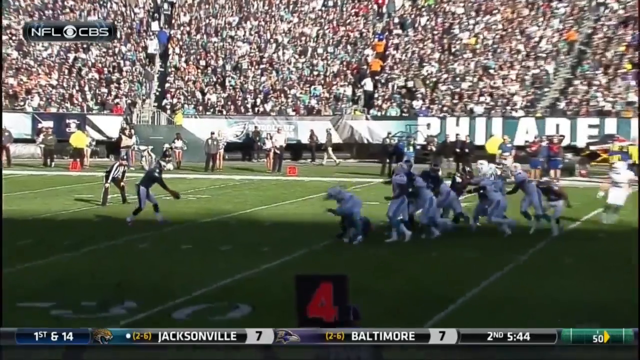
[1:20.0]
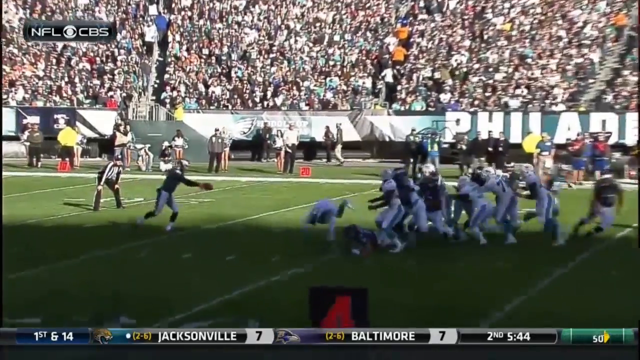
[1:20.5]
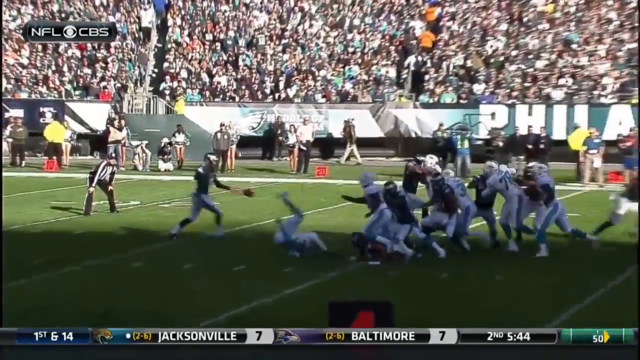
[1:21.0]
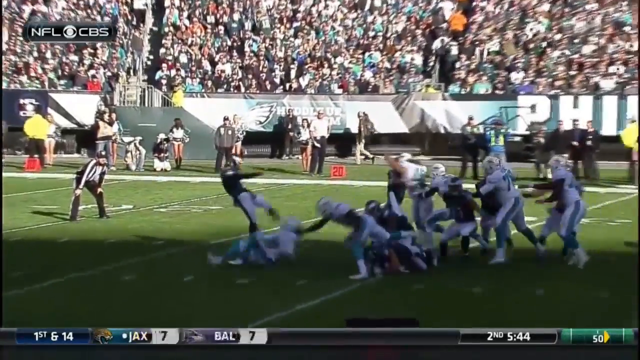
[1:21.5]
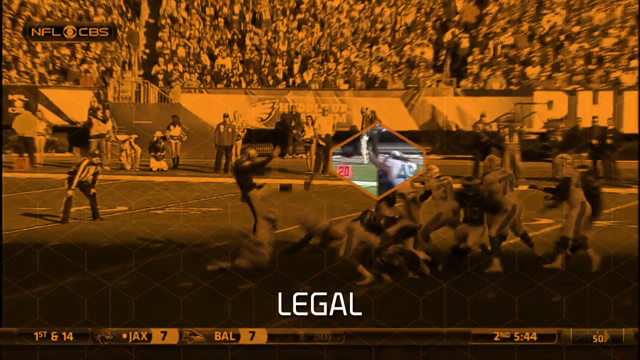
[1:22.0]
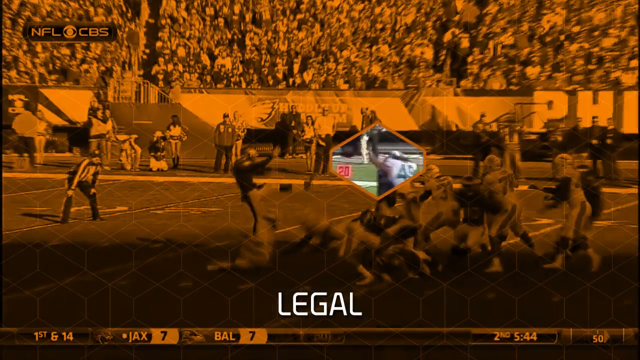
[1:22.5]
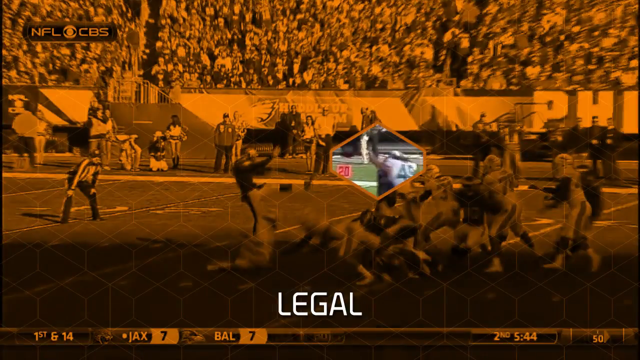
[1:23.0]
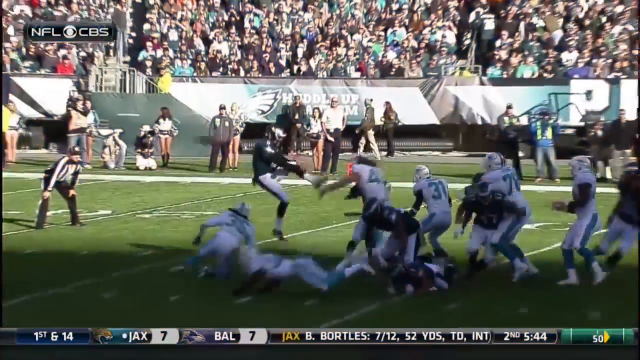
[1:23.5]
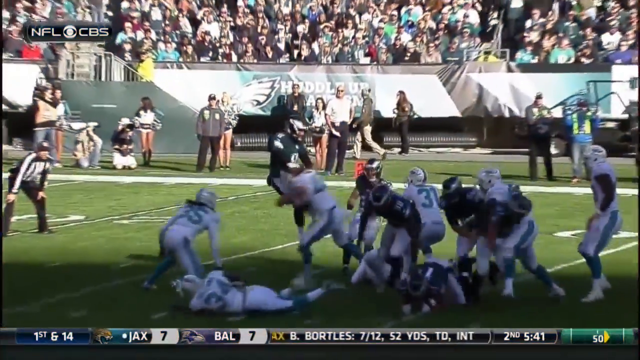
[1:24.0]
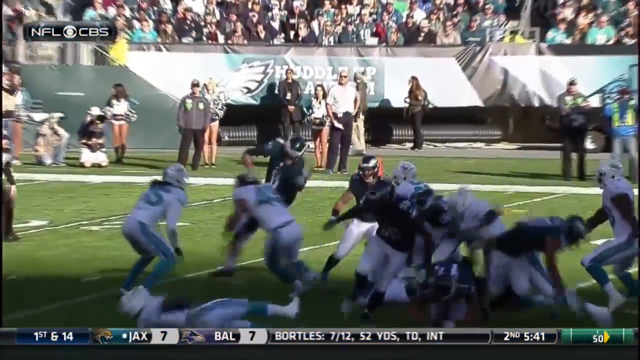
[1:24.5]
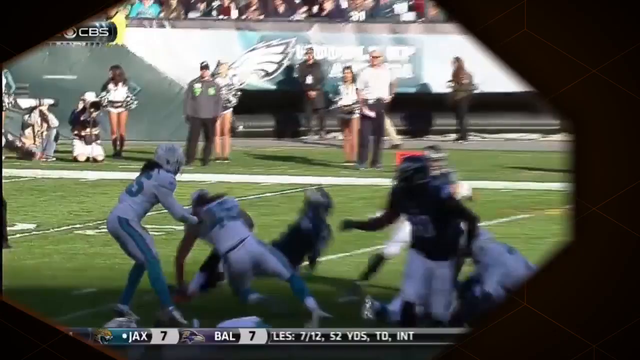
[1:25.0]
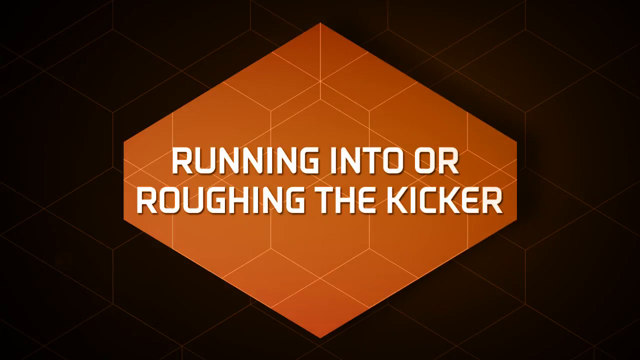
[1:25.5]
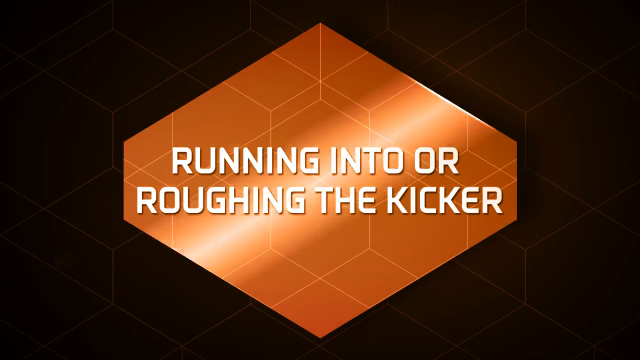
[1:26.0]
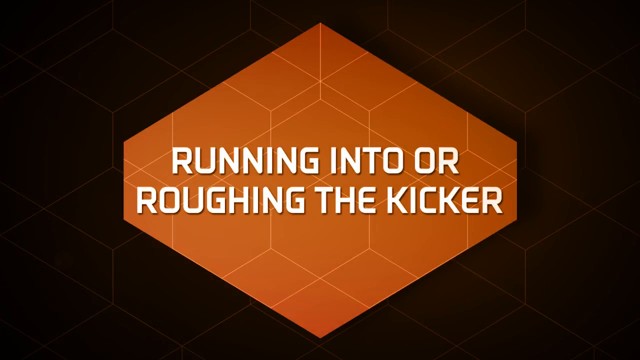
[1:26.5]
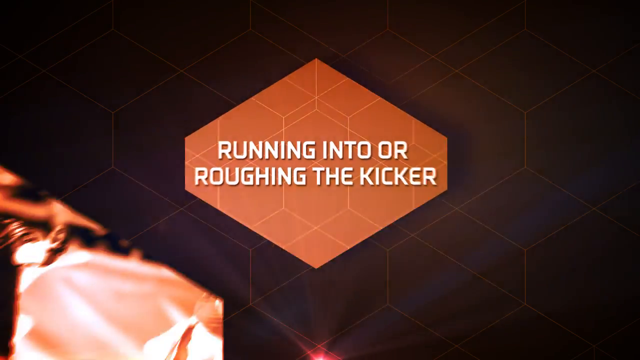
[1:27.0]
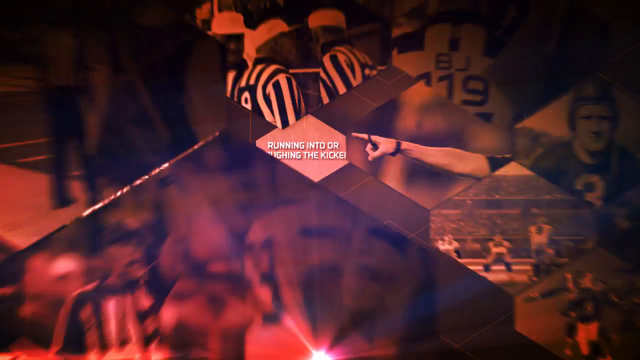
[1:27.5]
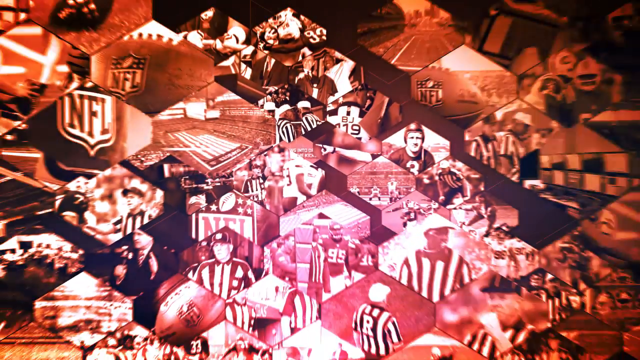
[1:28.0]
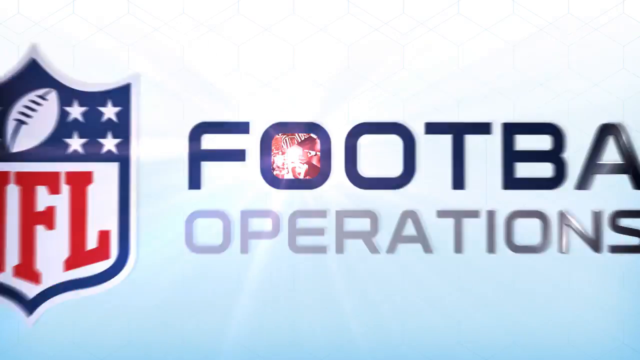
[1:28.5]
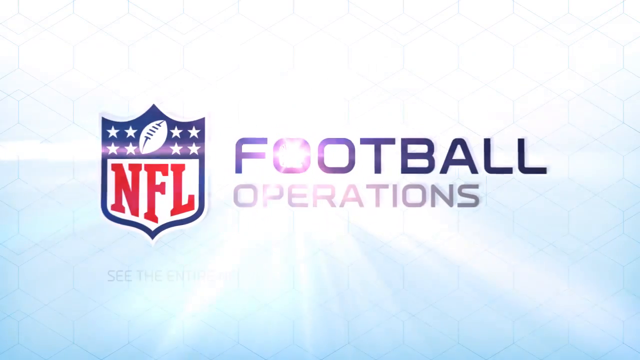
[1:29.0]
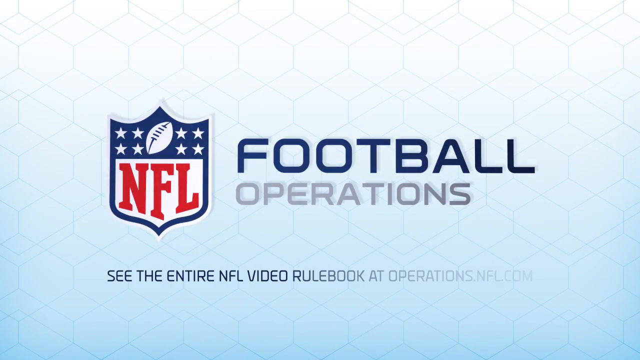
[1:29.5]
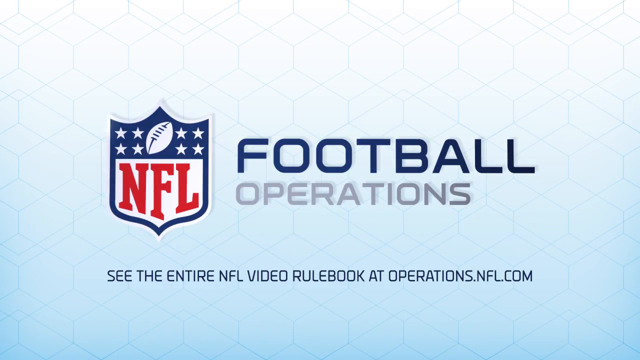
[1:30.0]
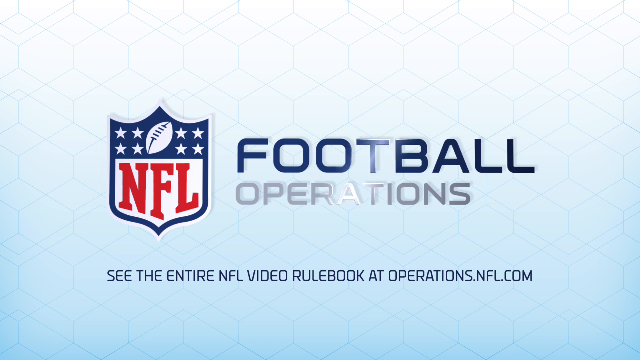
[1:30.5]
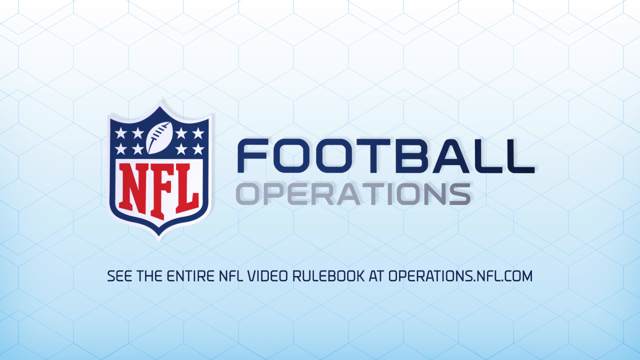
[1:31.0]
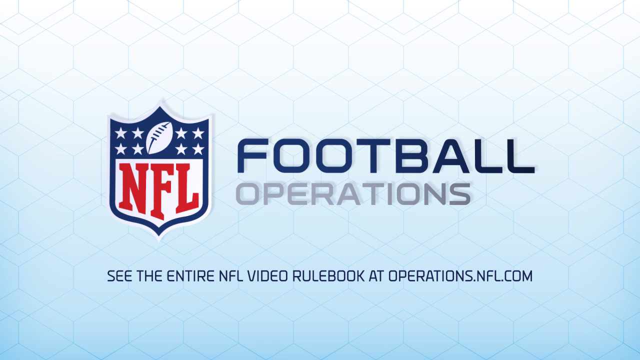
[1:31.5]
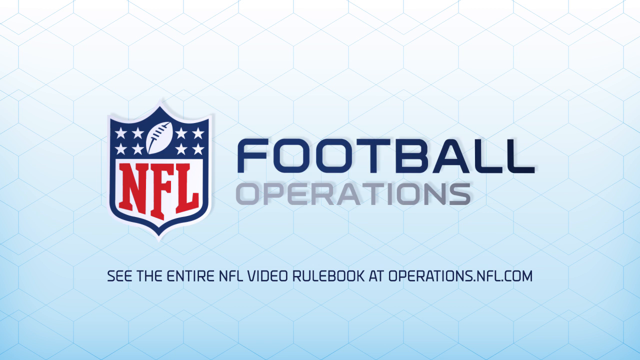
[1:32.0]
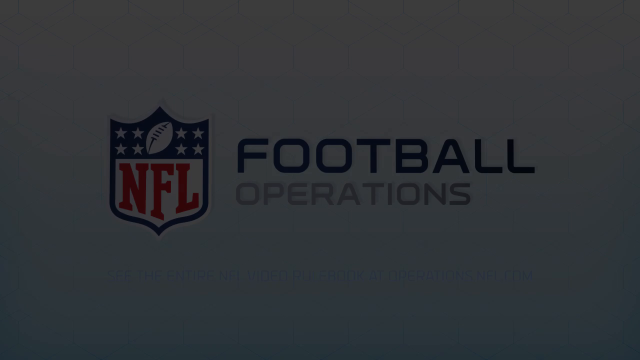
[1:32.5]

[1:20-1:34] In an Eagles play, the punter receives the ball at around his 25-yard line and drop kicks it. A player on the opposing team, apparently from the Dolphins, comes through, sticks his hand up, and blocks the football. The orange background screen with the diamond pops up, this time saying "legal." The player then hits the other player, and the punter kind of spins around and goes to the ground. Afterward, an orange diamond pops up in the middle of the screen, this time with a black background, and says "running into or roughing the kicker" in white text. The video then kind of does a zoom-out with a bunch of different diamonds of football clips, and shows the NFL logo with "football operations," as at the beginning. At the bottom this time, text reads "see the entire NFL rulebook at operations.nfl.com."